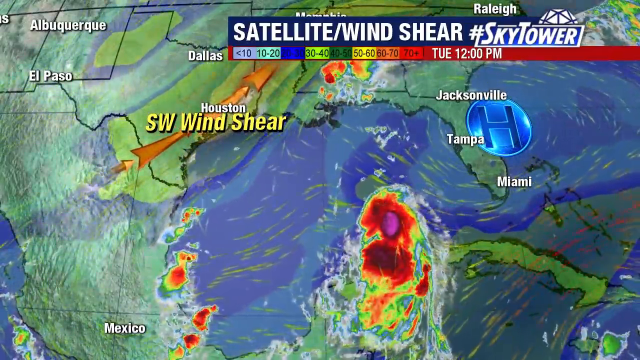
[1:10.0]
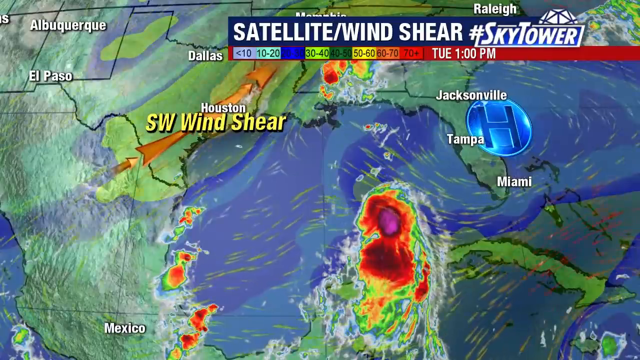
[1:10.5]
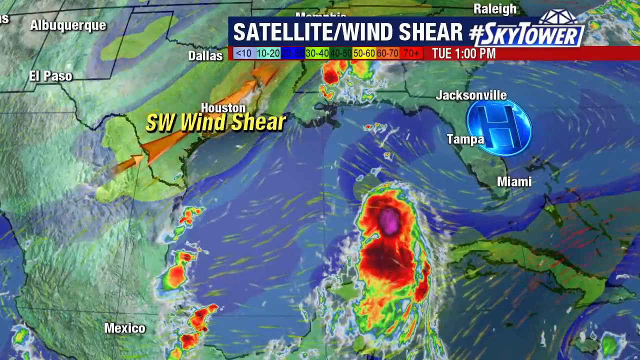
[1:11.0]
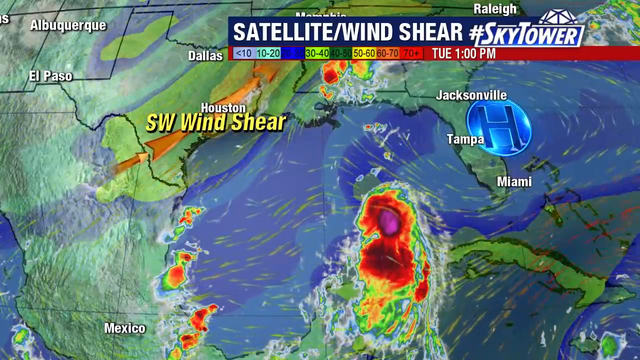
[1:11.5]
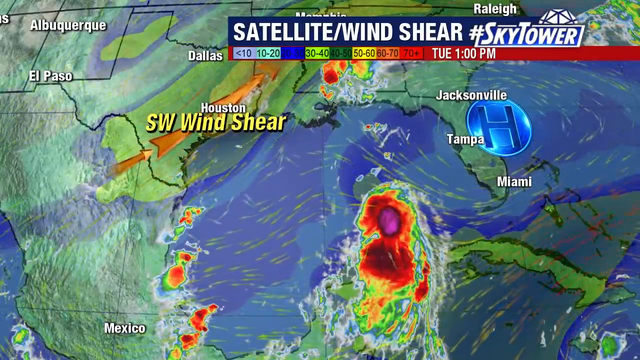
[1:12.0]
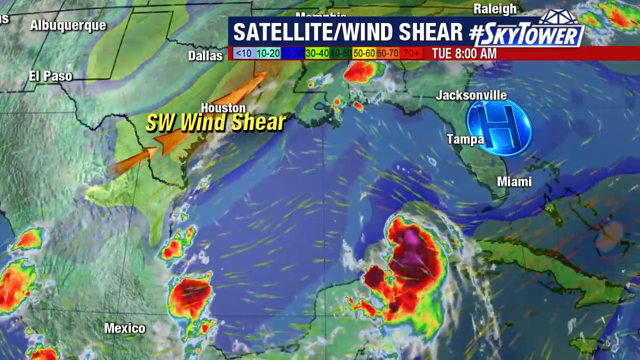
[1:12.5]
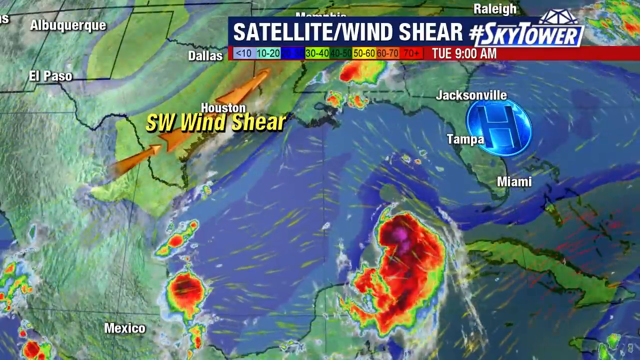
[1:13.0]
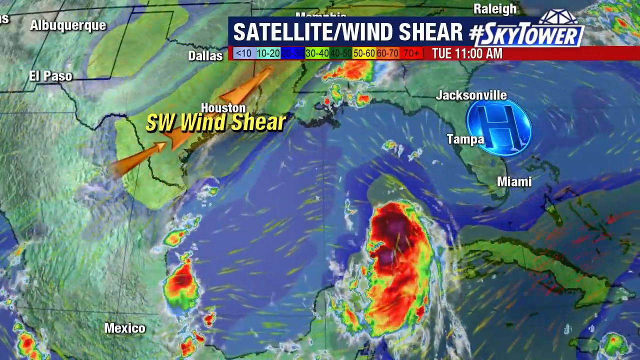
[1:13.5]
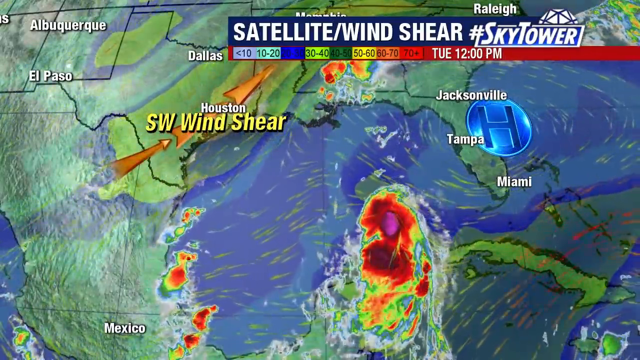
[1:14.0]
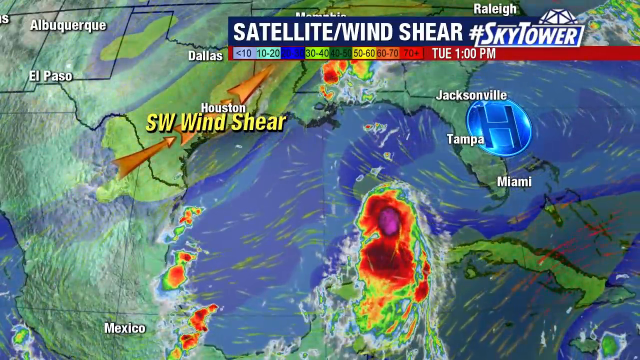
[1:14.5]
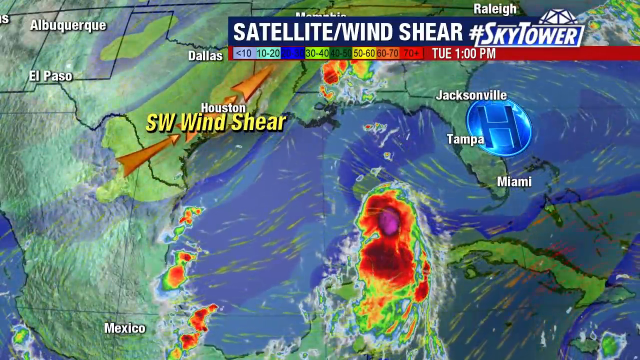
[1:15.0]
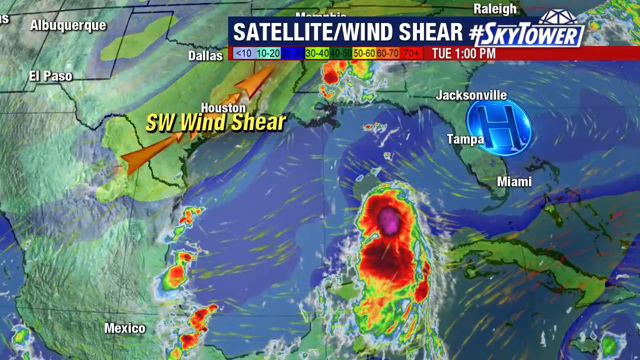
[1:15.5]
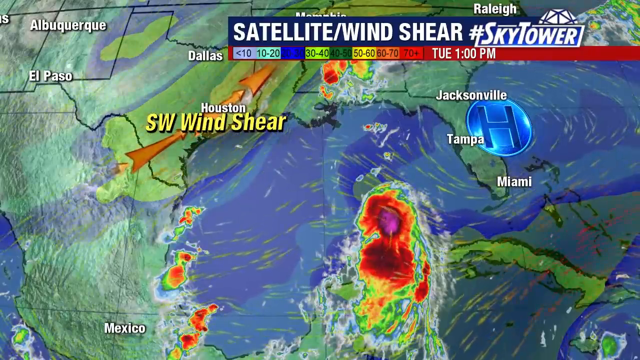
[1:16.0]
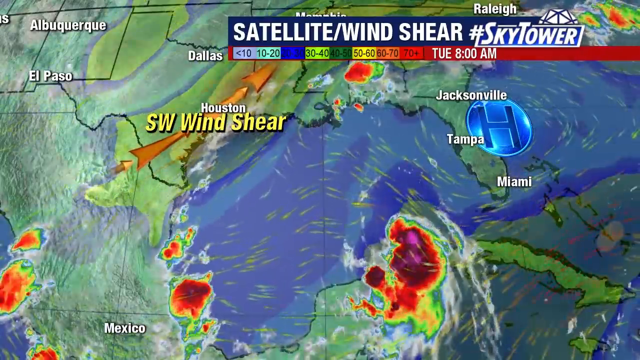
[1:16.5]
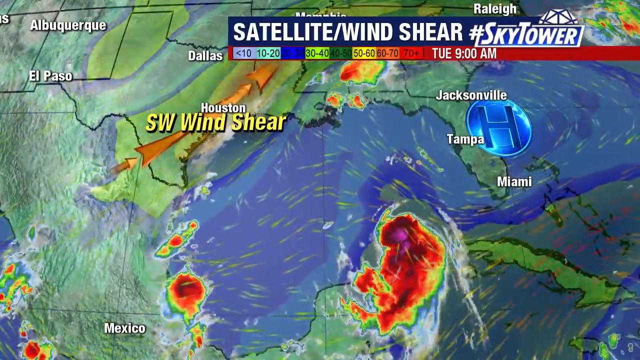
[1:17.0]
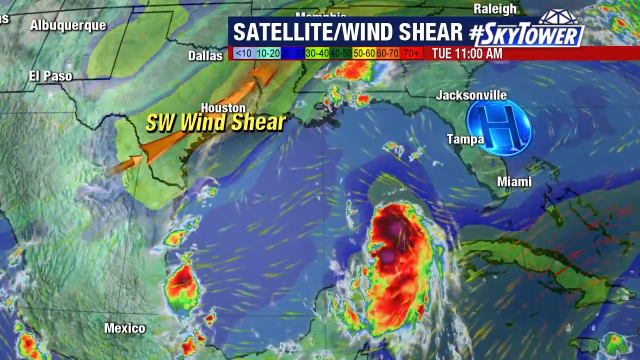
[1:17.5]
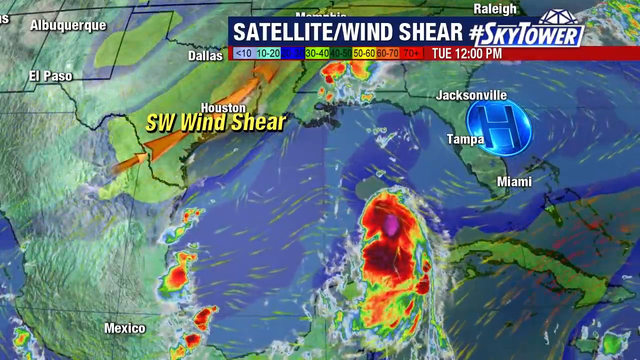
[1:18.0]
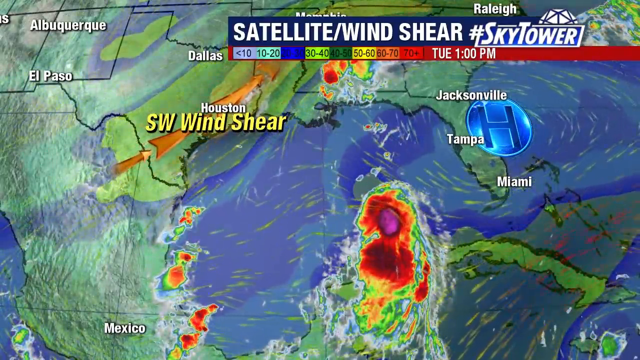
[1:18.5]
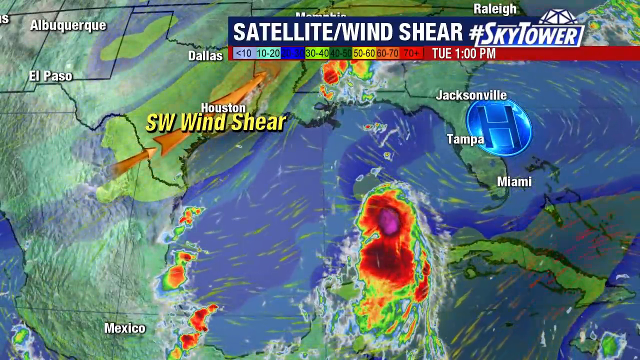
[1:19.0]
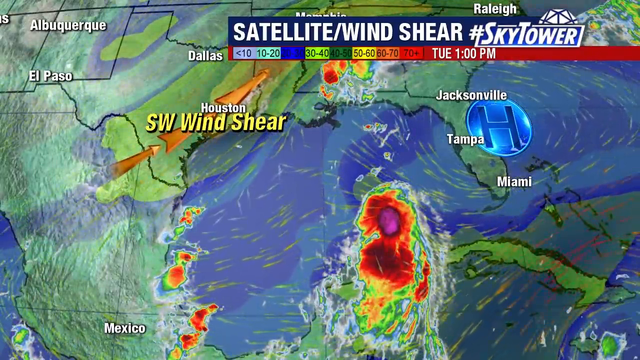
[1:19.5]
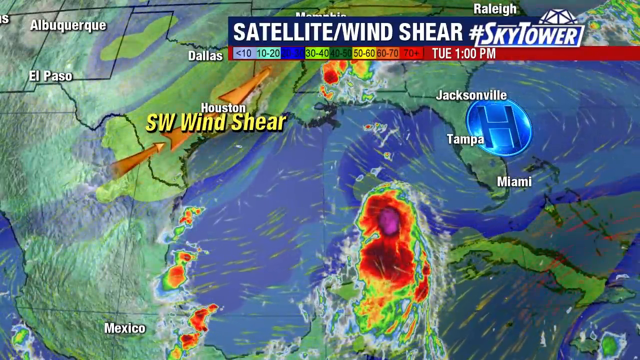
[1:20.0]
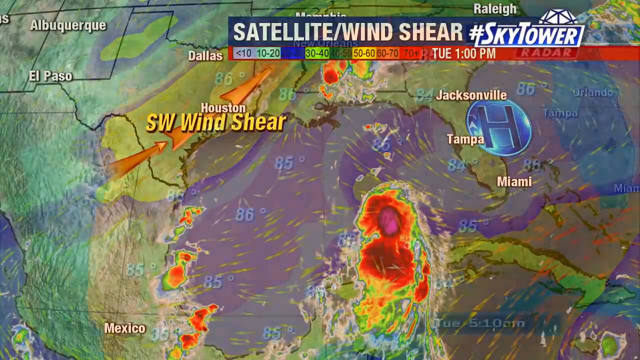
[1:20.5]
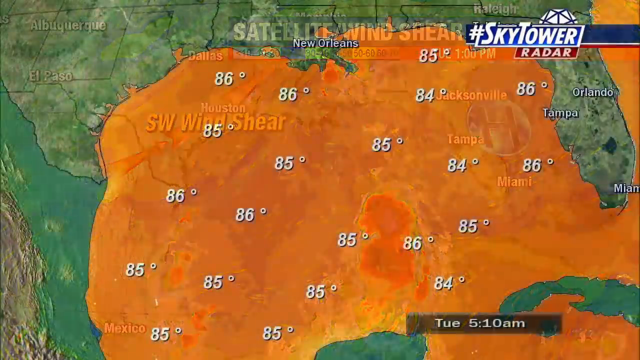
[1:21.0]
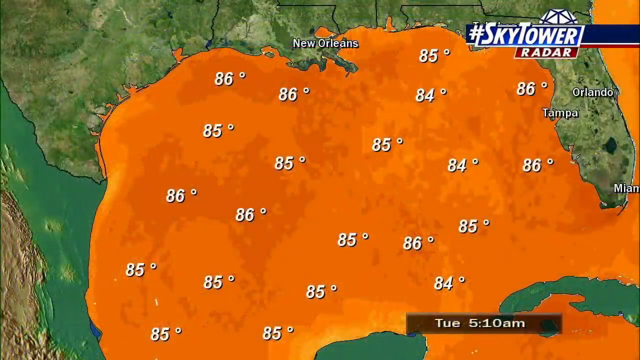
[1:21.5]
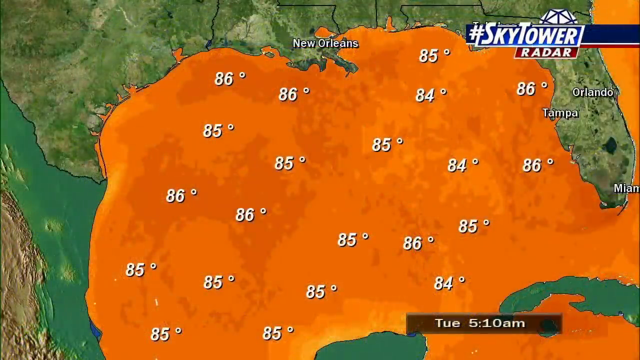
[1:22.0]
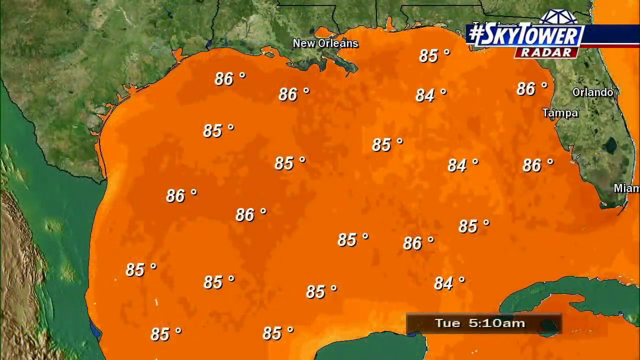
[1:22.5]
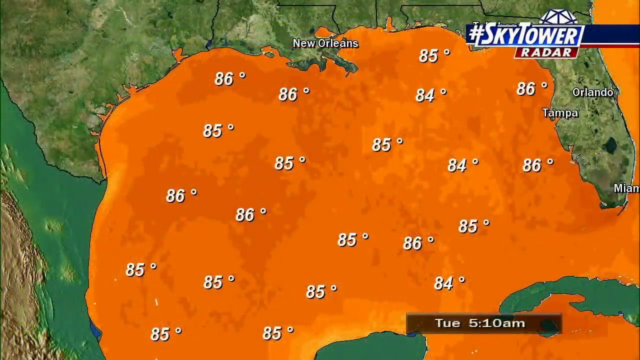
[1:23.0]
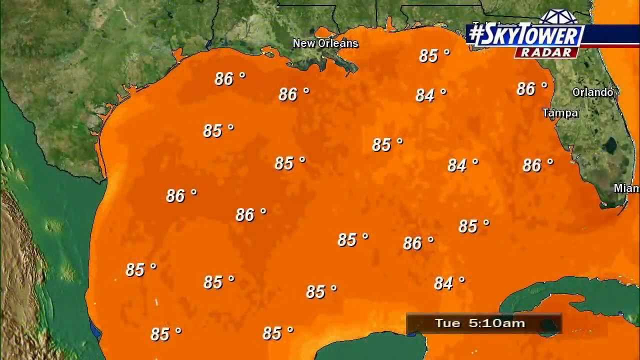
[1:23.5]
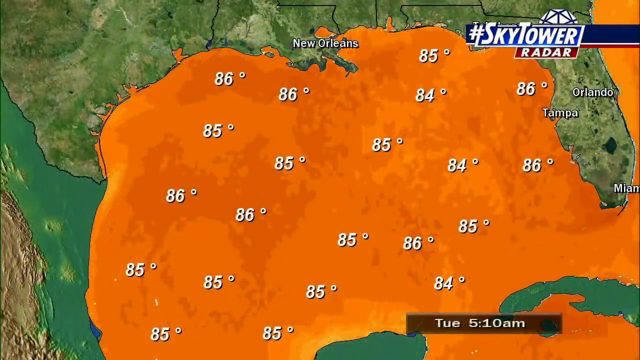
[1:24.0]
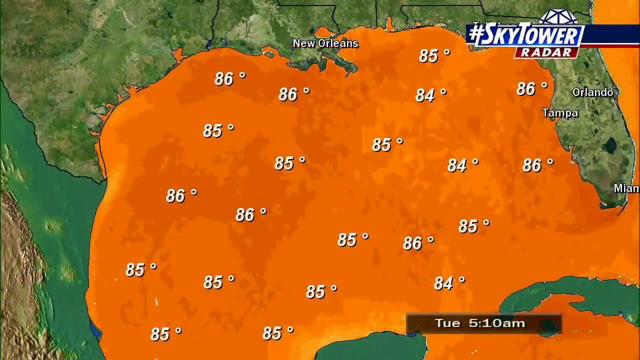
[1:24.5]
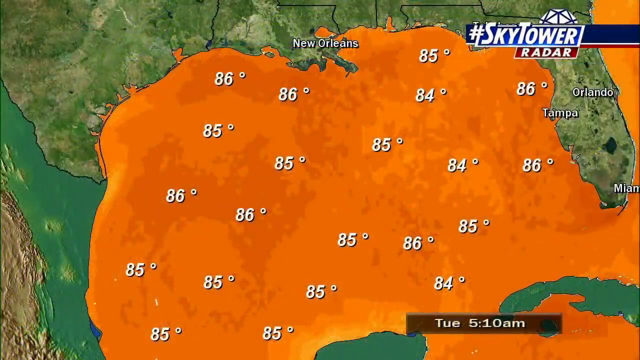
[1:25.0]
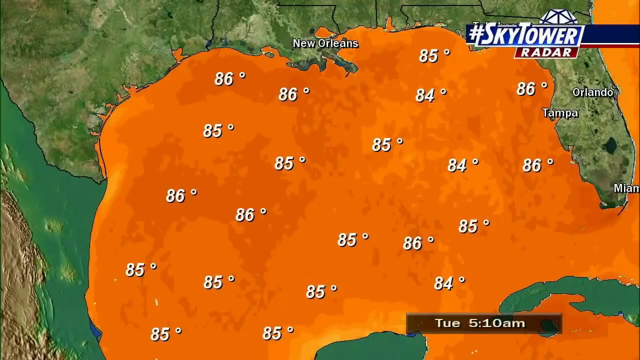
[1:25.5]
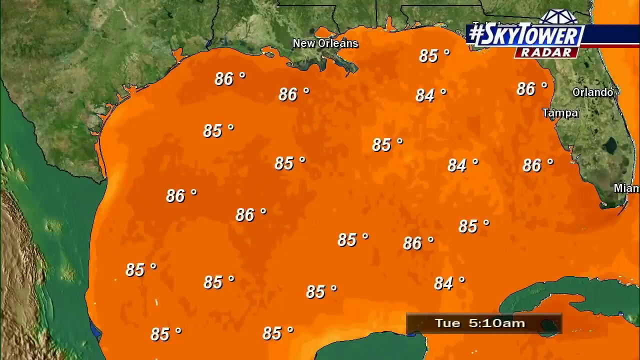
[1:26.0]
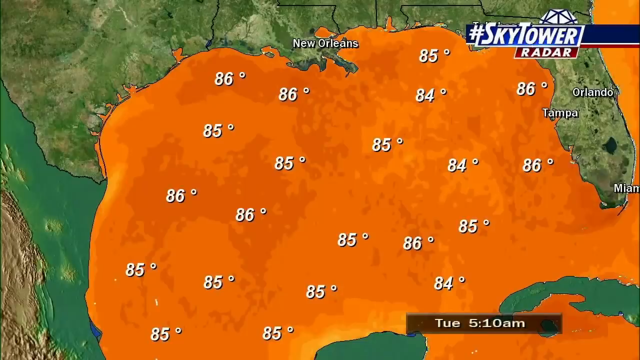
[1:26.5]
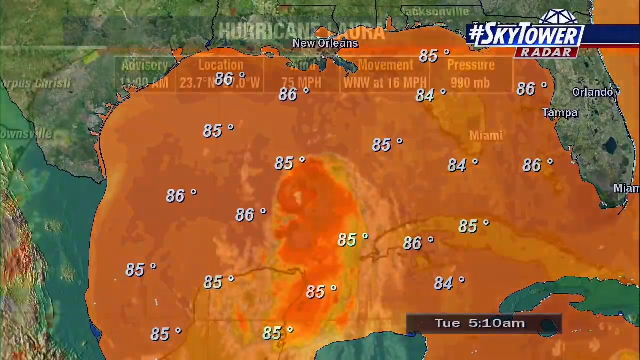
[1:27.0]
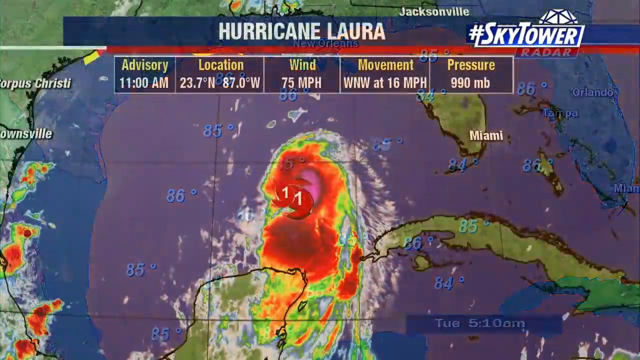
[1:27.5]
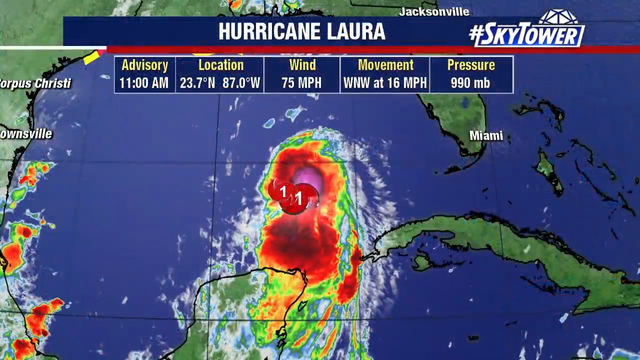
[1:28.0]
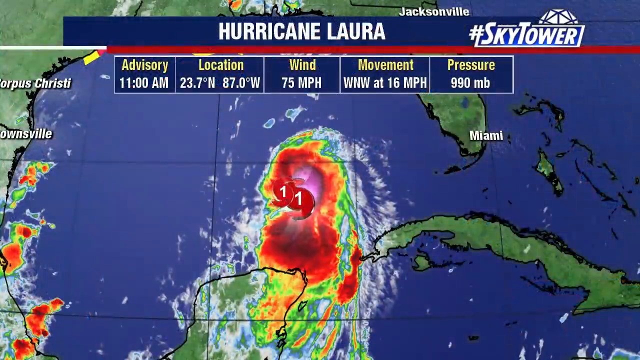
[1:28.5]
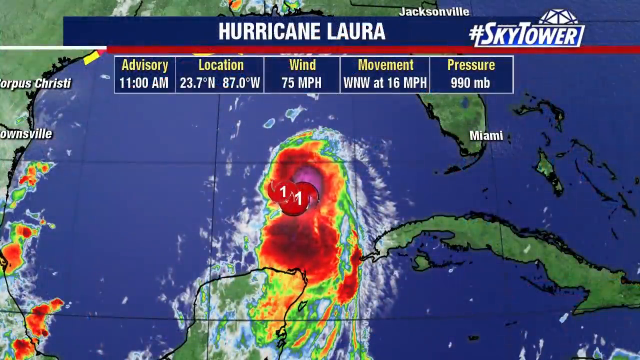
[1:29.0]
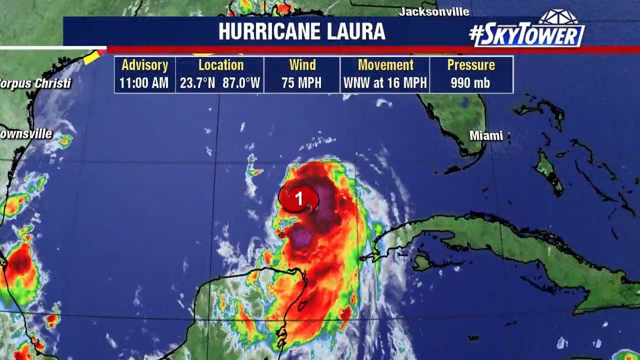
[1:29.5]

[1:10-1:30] The satellite wind shear map continues, with this area of the United States seemingly kind of protected by the way everything is moving with the high pressure, keeping the storm out. The next map shows temperatures: at Tuesday 5:10 a.m., the water temperatures in the area are all in the mid 80s, with 84s, 85s, and 86s all the way across. The storm is now named Hurricane Laura, with an advisory as of 11 a.m. The map shows its location, still off the tip of Mexico. The wind is 75 miles per hour, it is moving west-northwest at 16 miles per hour, the pressure is 990 mb, and it is shown spinning as a Category 1.